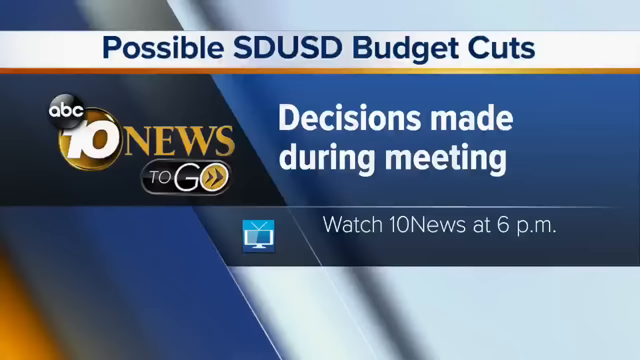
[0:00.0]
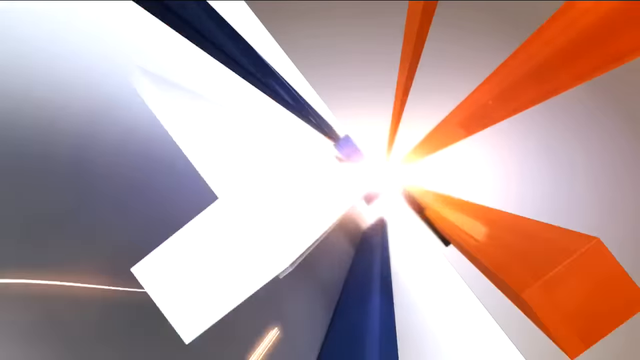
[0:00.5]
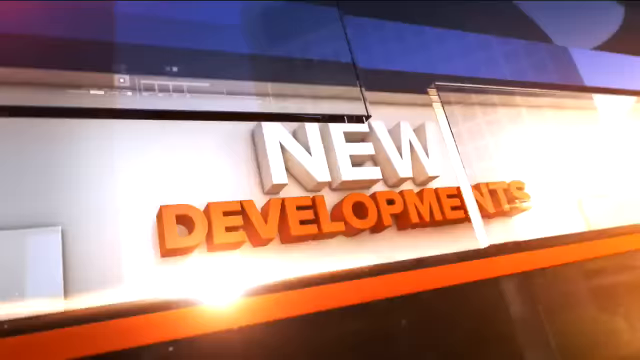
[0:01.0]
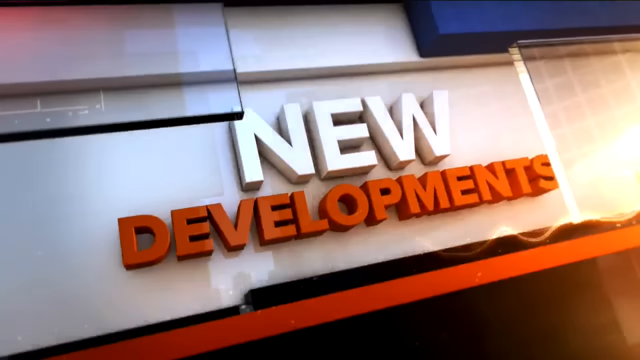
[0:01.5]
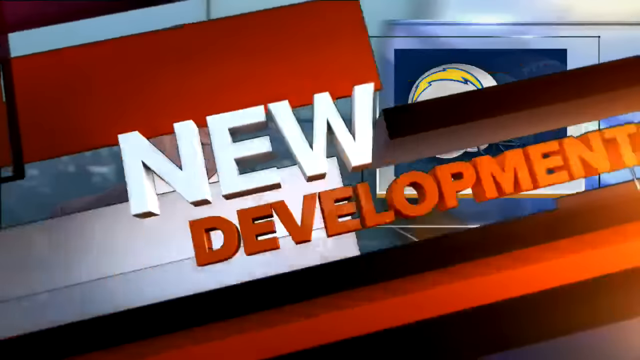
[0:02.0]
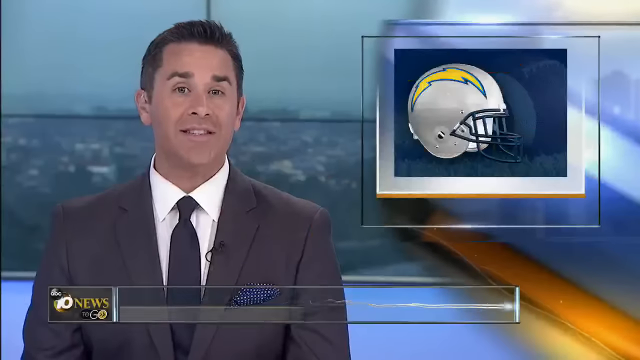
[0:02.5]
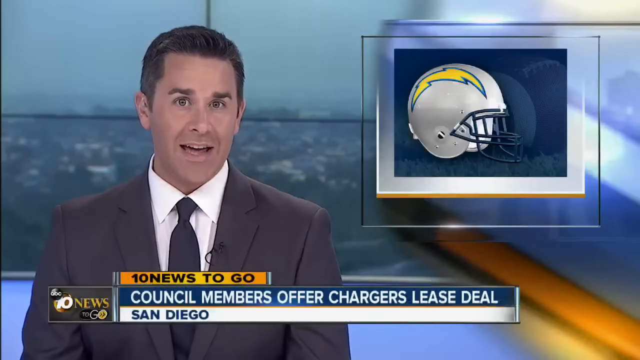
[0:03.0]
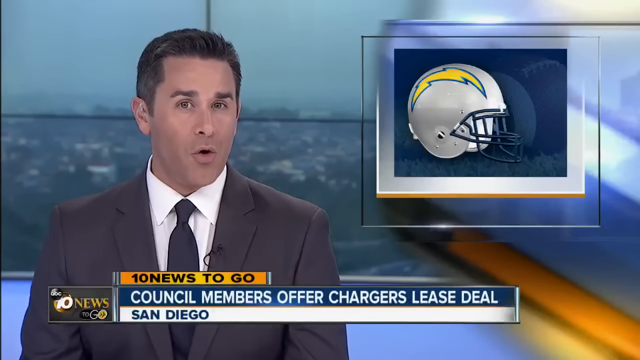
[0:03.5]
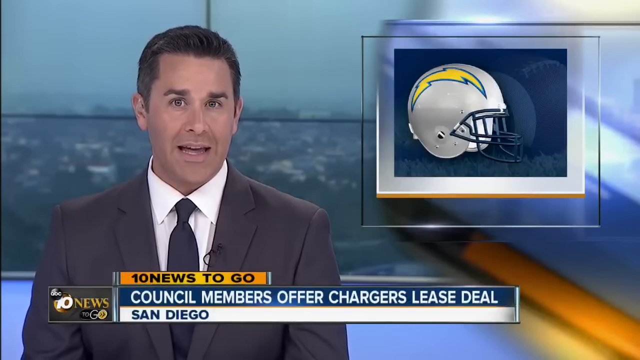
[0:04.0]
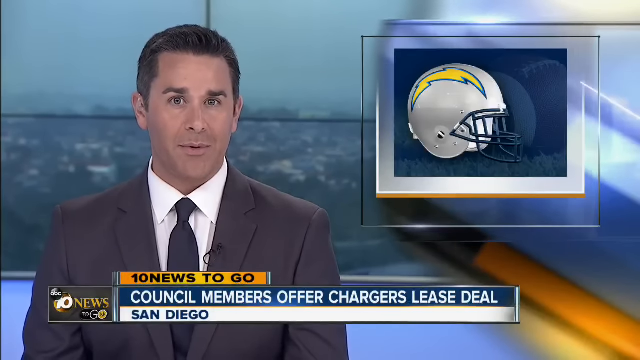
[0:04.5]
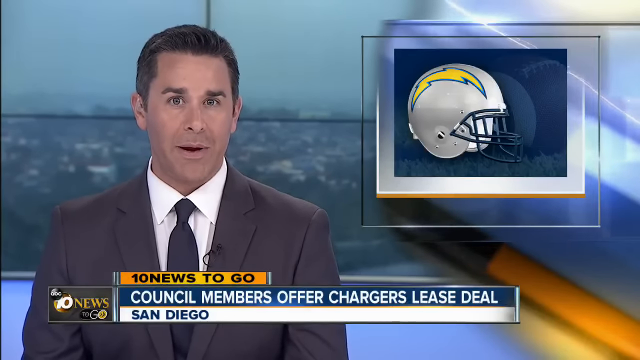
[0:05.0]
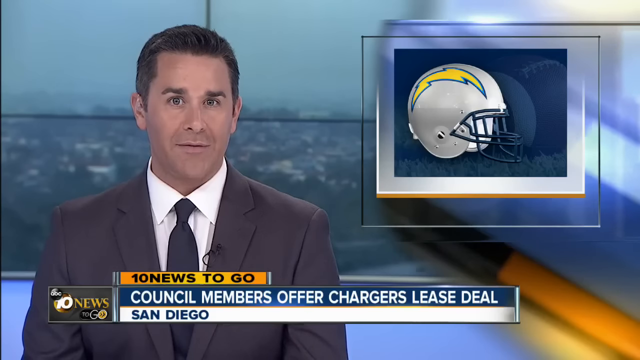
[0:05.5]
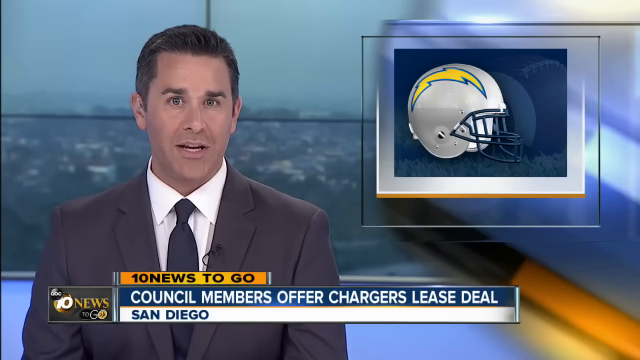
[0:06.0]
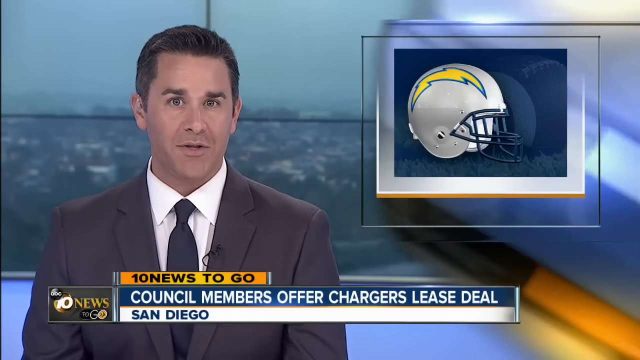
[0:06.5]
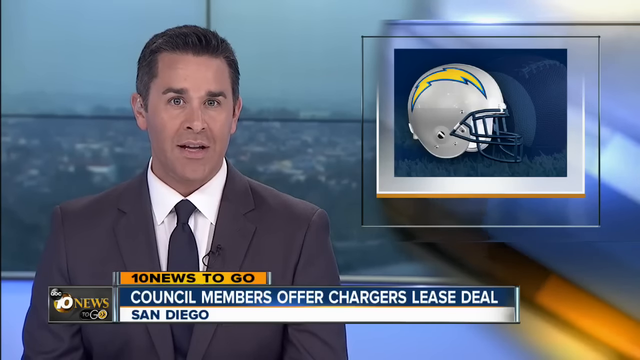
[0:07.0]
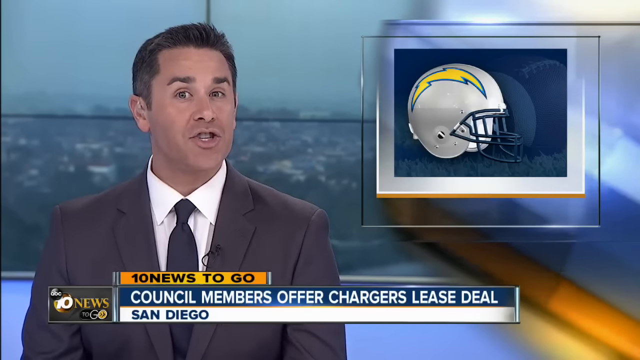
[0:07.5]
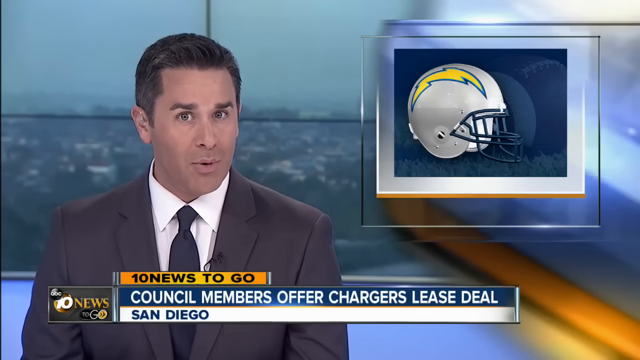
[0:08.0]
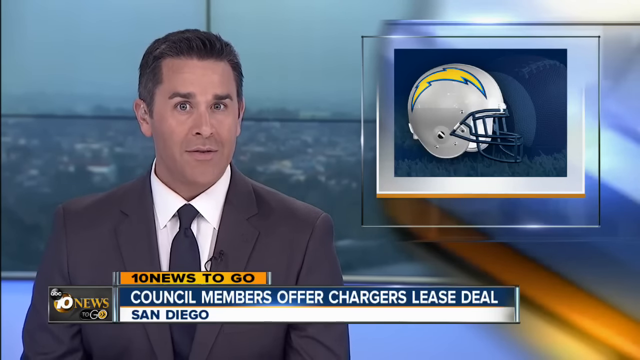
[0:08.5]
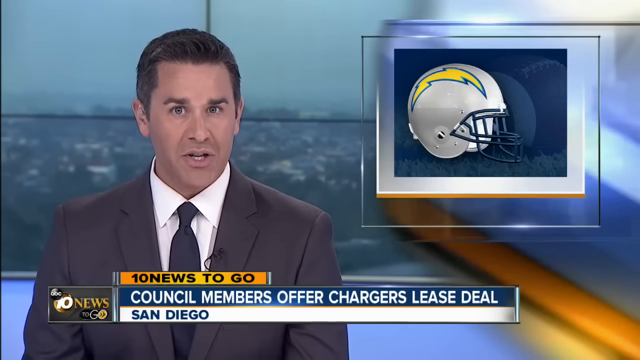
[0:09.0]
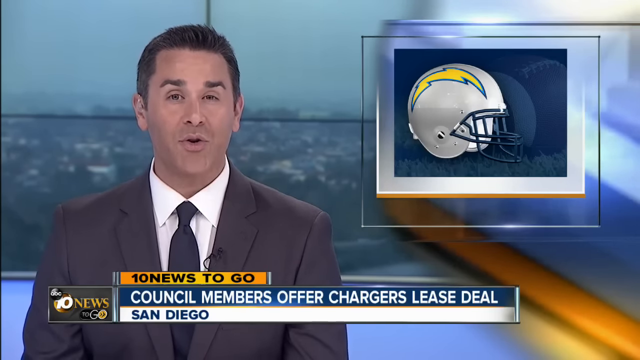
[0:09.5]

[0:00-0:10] The footage is from Channel 10 News ABC. On-screen text reads "decisions made during meeting, possible SDUSD budget cuts" and "new developments," and under Channel 10 News to go the text reads "council members offer Chargers lease deal," a story about San Diego. In the top right corner of the screen is a San Diego Chargers football helmet. A man with short black hair is talking; he appears to wear a slightly grayish brown suit with a white shirt and possibly a tie of about the same color.